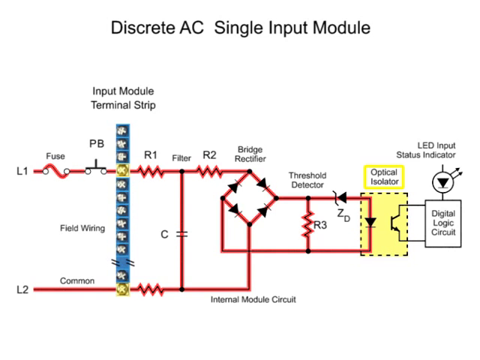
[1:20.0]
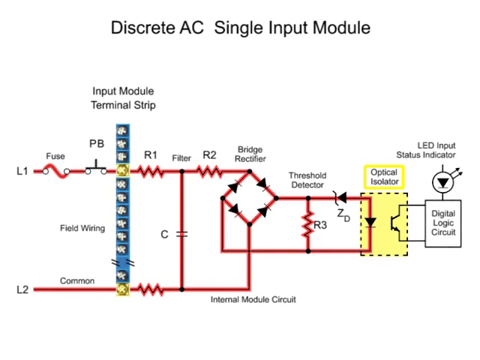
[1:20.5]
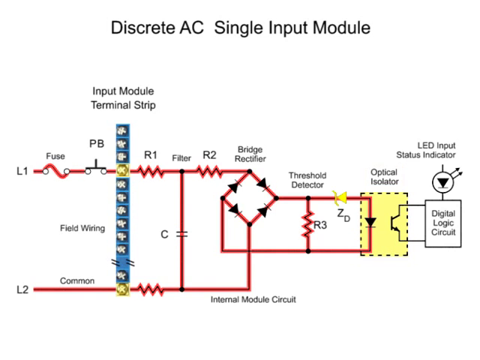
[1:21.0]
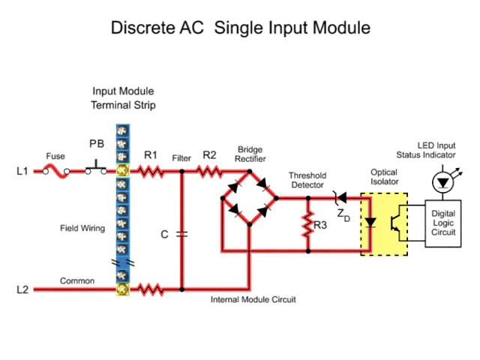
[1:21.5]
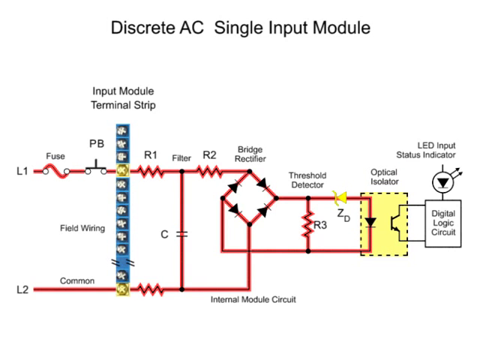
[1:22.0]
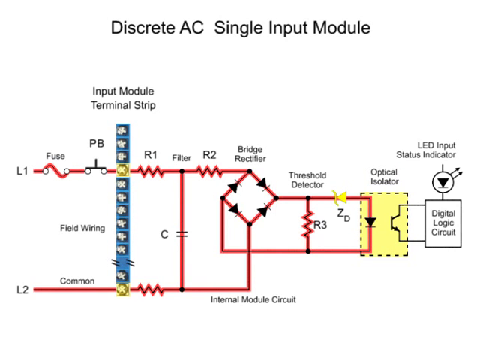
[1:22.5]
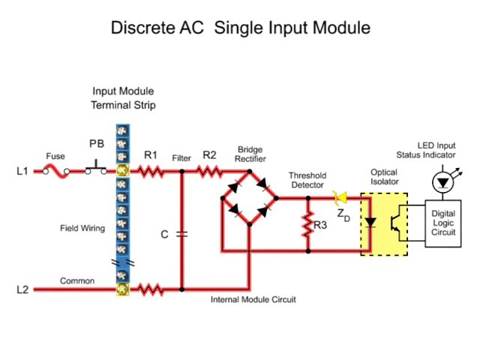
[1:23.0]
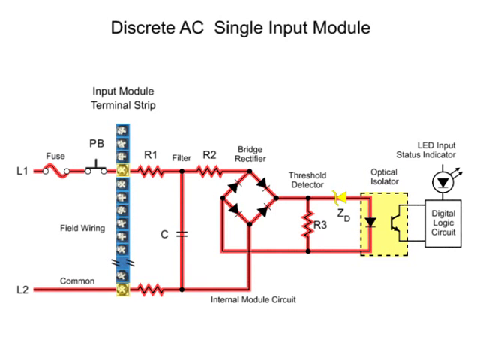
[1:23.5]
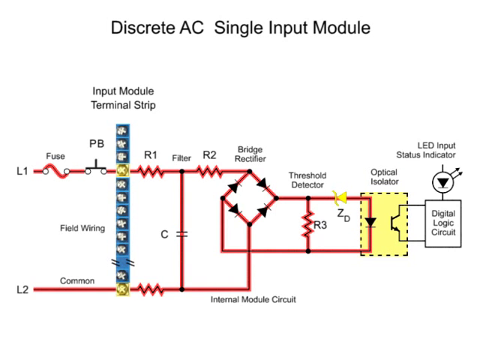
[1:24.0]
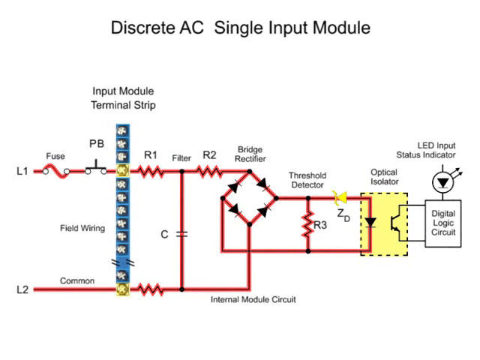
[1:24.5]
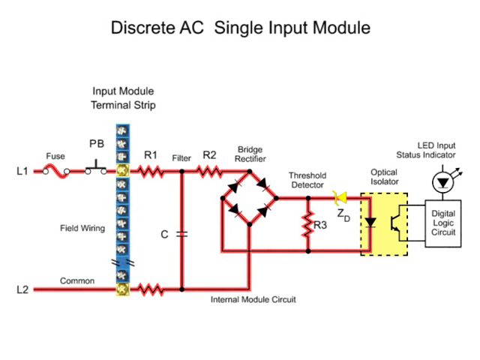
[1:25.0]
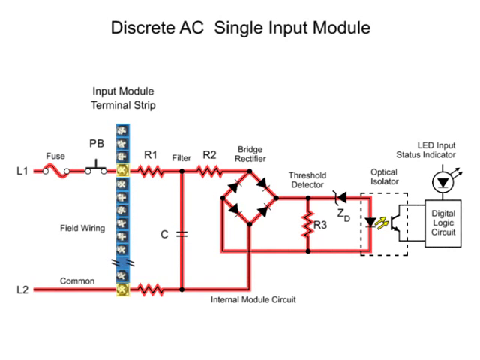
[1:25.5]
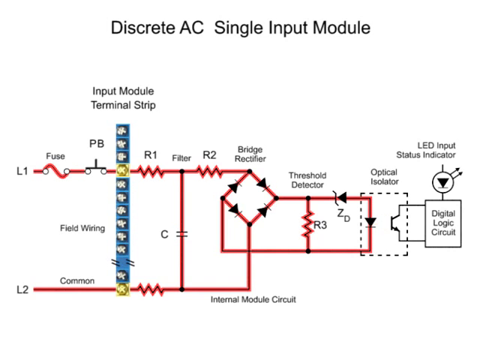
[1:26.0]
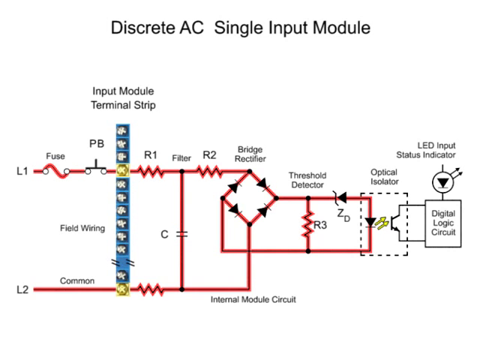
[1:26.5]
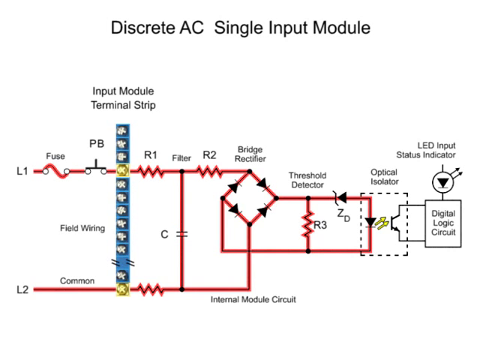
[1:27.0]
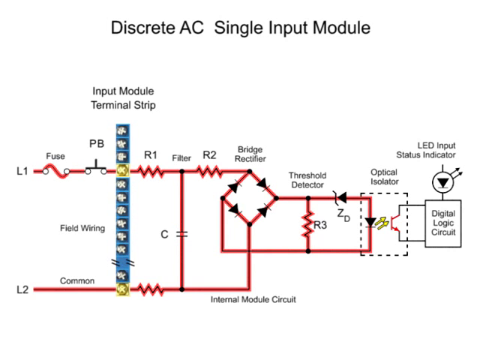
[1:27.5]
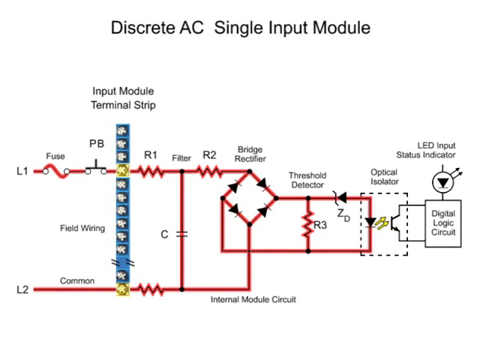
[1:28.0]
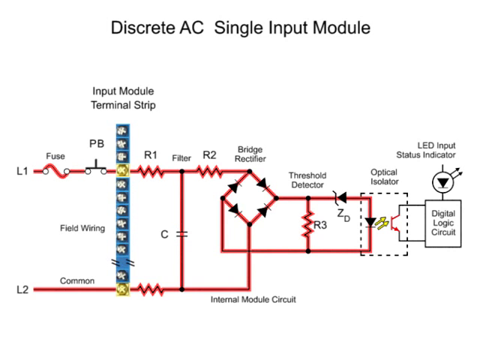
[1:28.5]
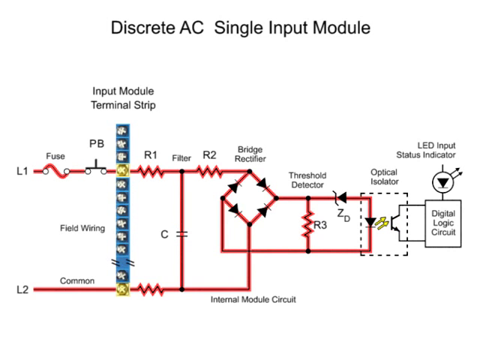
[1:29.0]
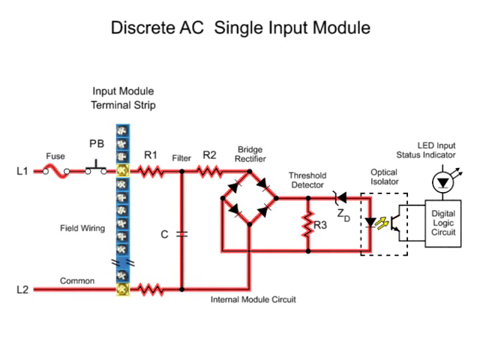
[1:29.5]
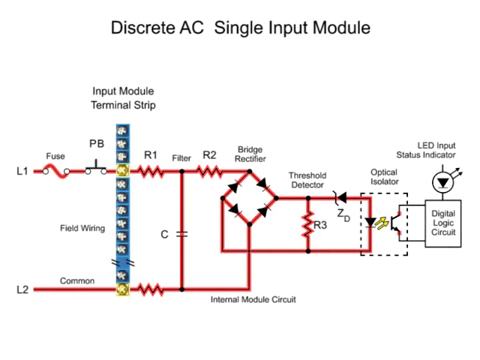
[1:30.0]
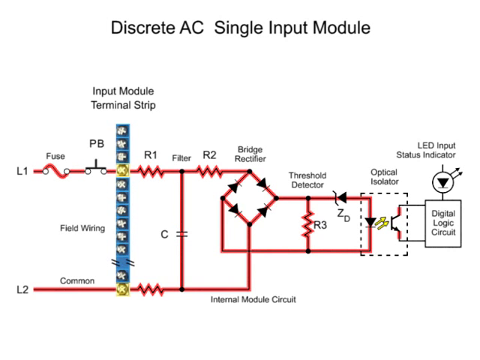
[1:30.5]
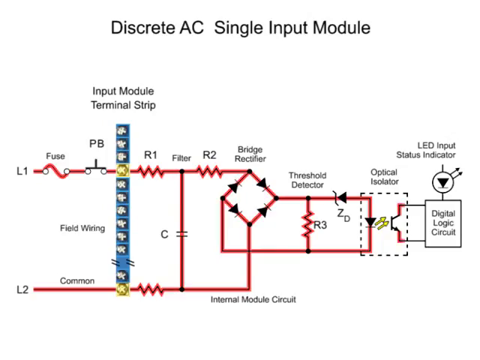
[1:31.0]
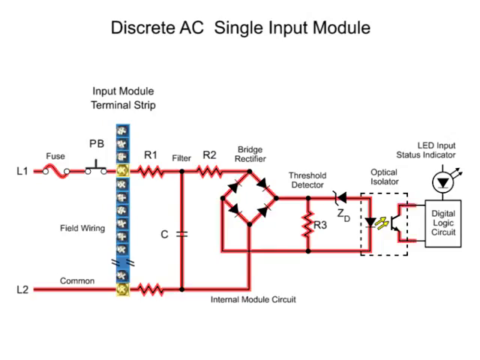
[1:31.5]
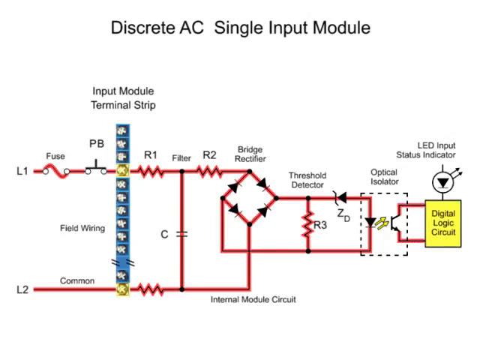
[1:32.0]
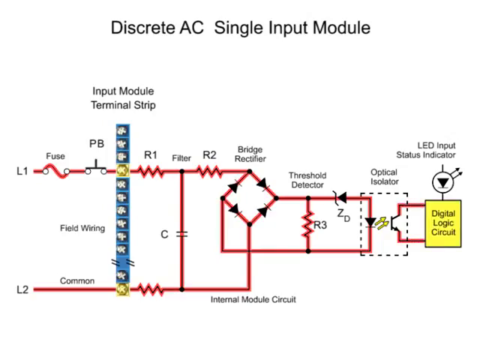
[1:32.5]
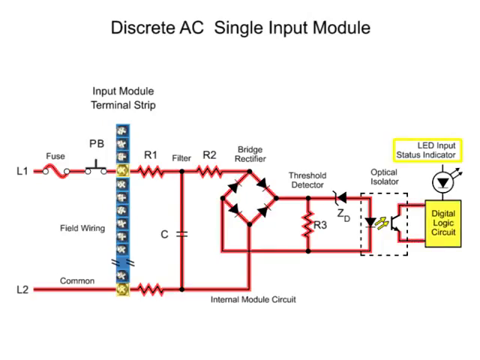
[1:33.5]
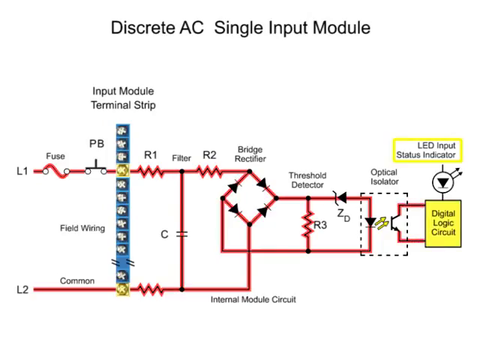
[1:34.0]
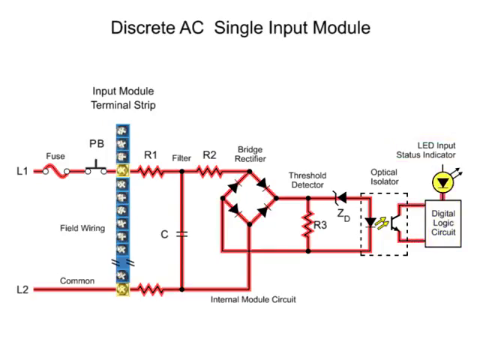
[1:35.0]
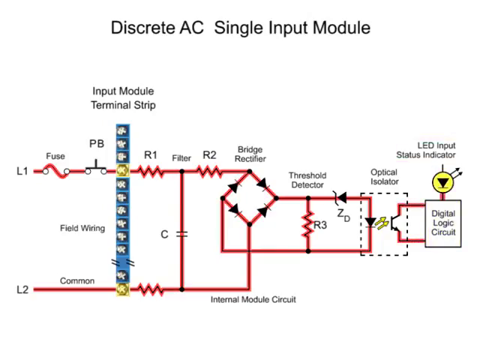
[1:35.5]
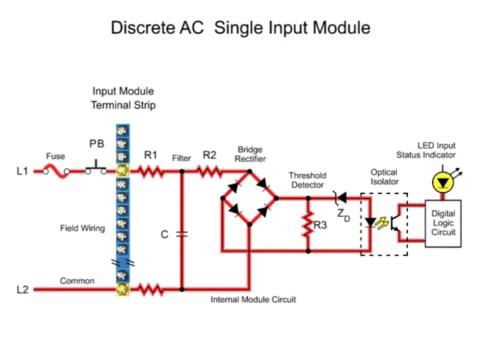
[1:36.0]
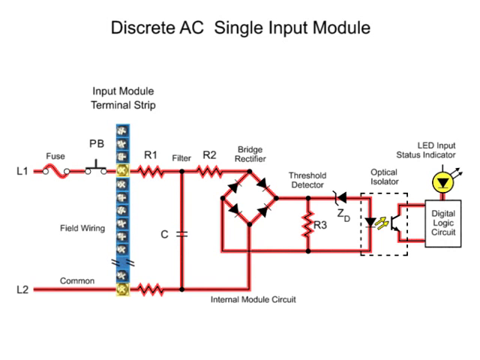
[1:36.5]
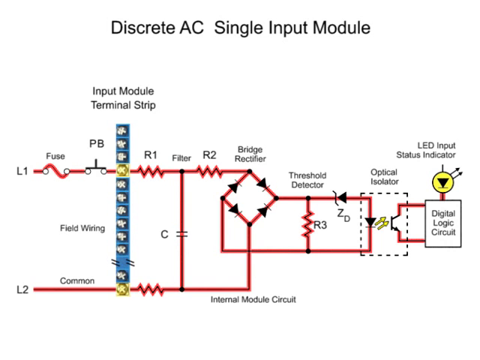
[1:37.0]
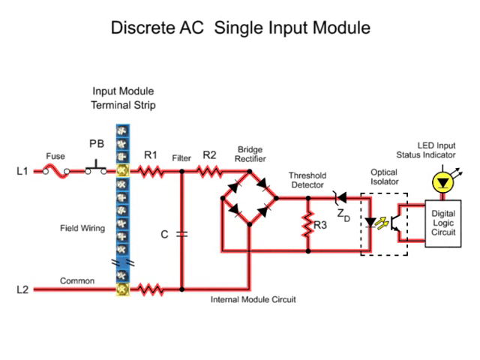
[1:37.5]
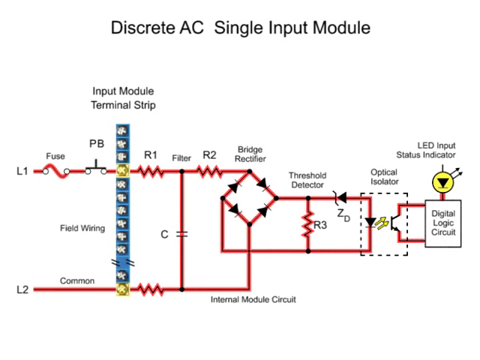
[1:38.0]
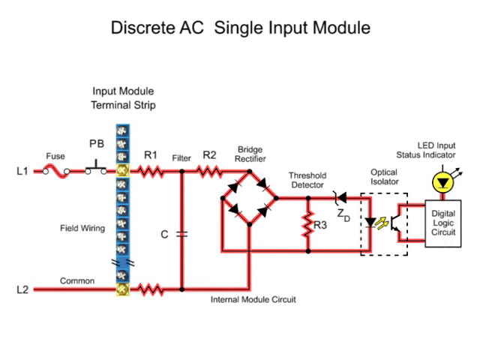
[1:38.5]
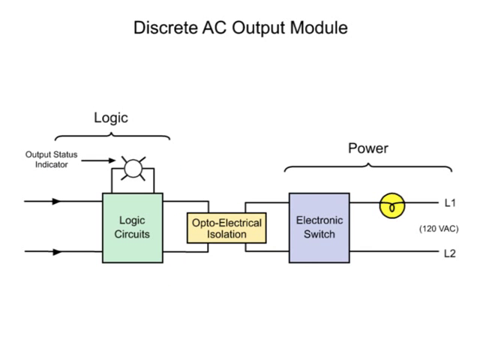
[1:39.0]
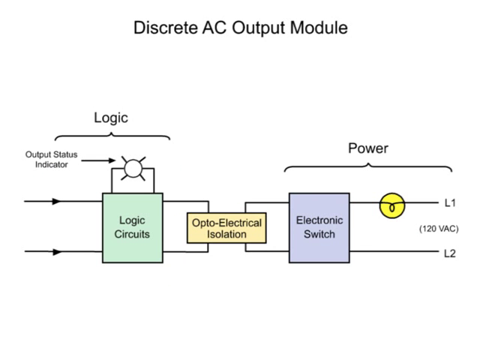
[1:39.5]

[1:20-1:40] The focus is on the optical isolator as current flows through it into the digital logic circuit, leading to the LED input status indicator functioning. The current is followed from the input module terminal strip through the optical isolator into the digital logic circuit and on to the LED input status indicator, and the diagram breaks down into finer details. At the end there is a summary diagram showing the logic, the output status indicator, the logic circuit, electrical isolation, an electronic switch, power, and L1 and L2.